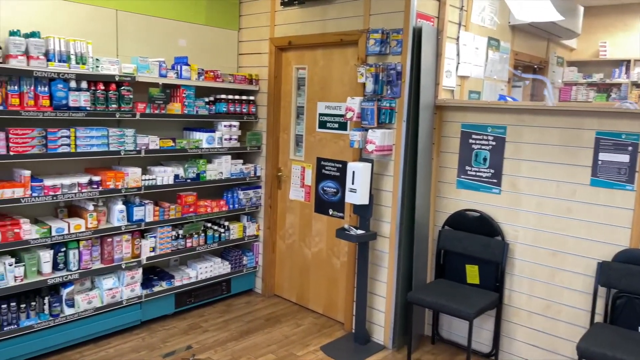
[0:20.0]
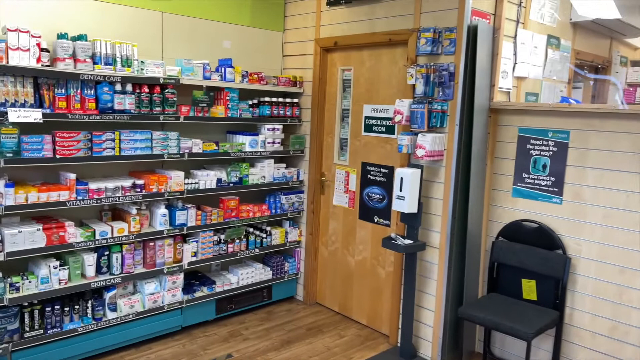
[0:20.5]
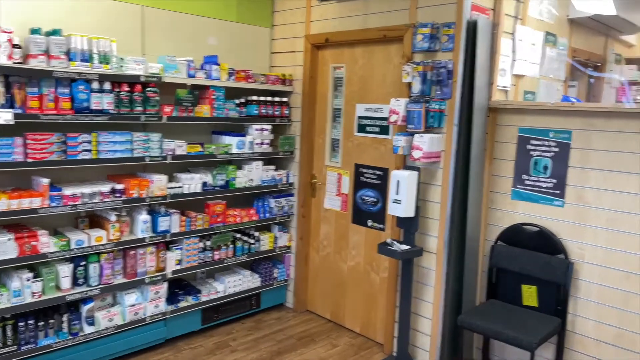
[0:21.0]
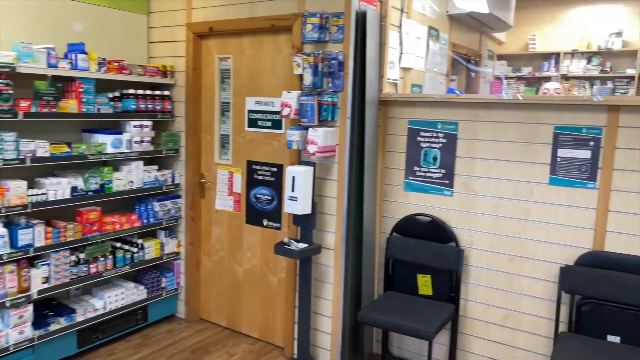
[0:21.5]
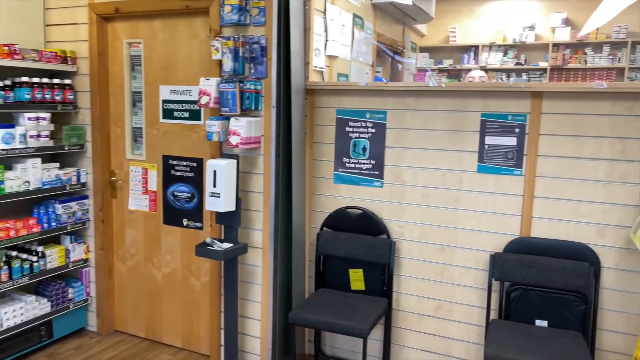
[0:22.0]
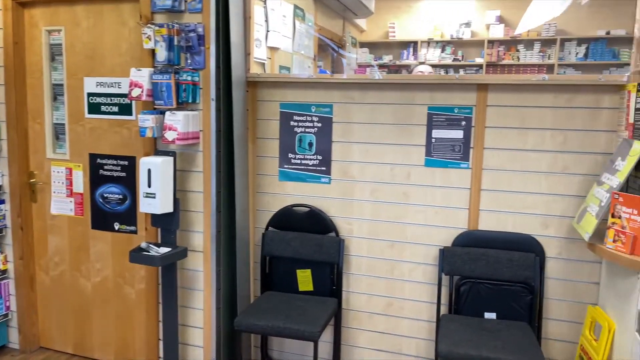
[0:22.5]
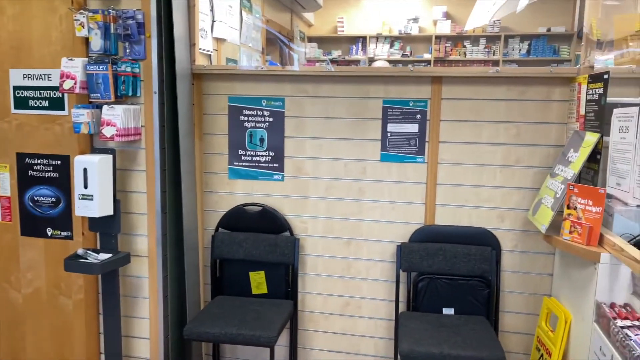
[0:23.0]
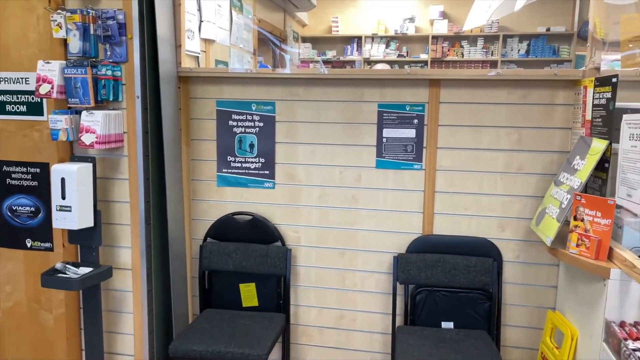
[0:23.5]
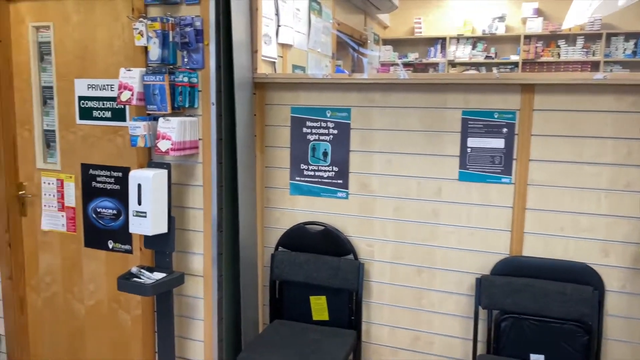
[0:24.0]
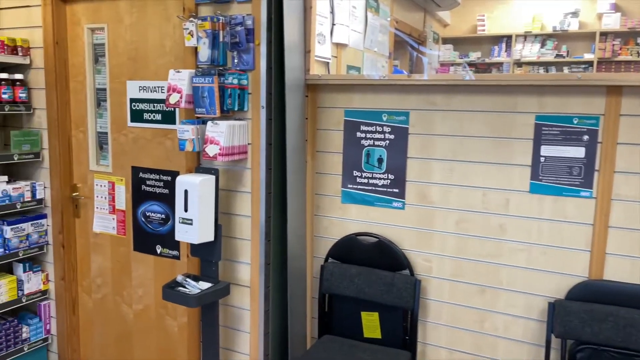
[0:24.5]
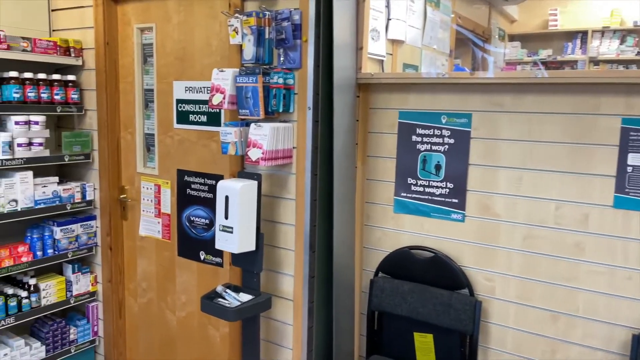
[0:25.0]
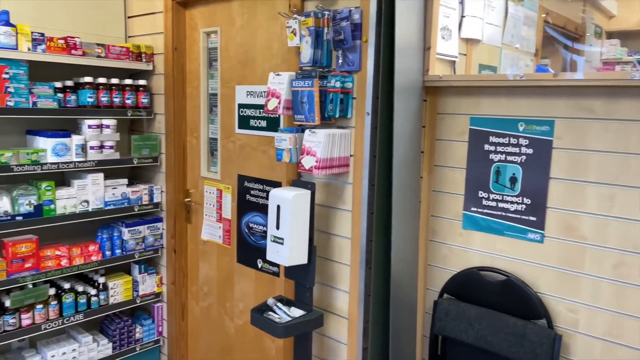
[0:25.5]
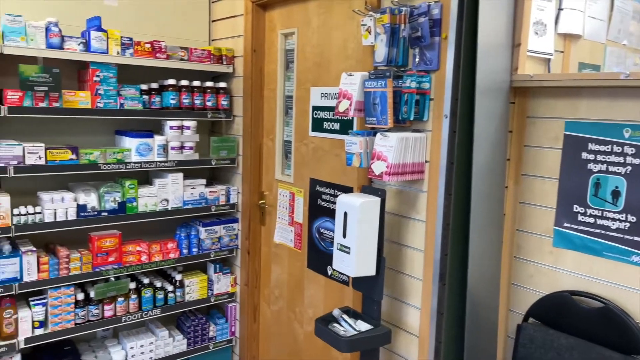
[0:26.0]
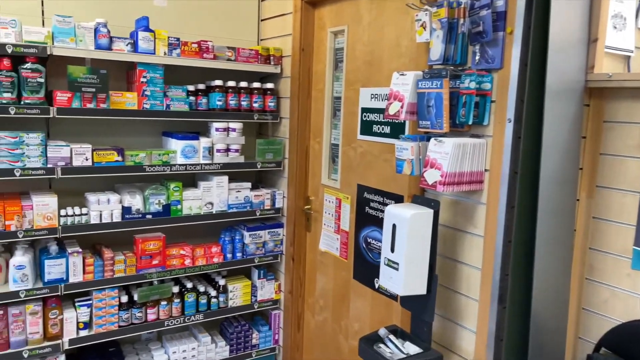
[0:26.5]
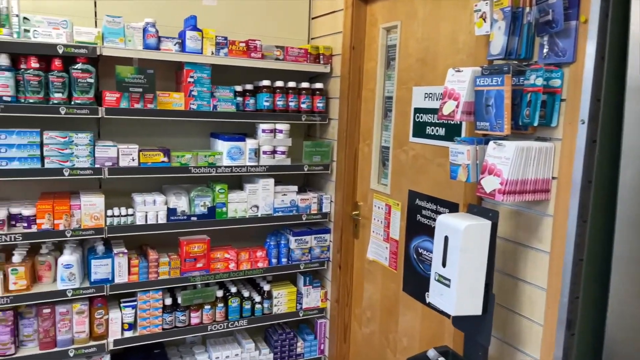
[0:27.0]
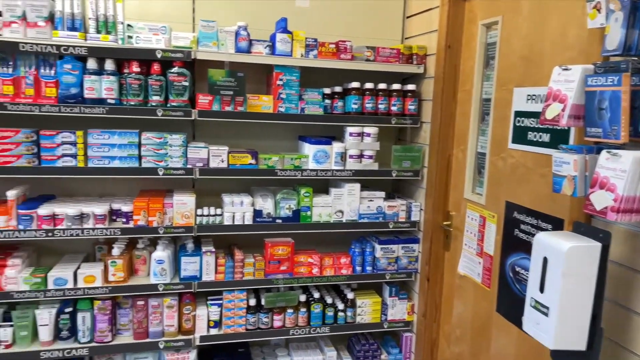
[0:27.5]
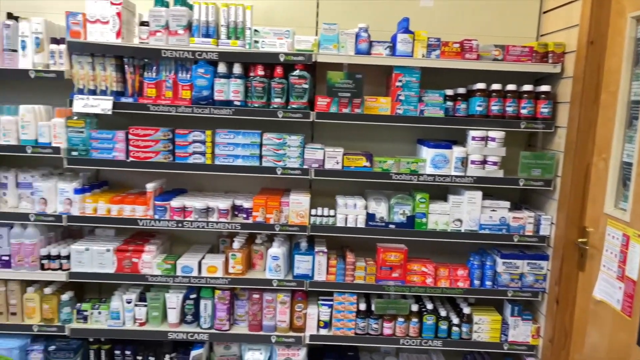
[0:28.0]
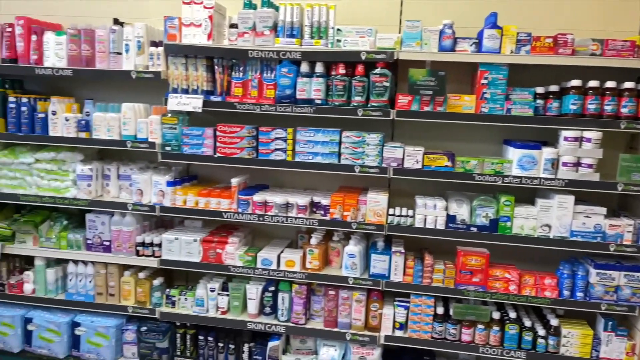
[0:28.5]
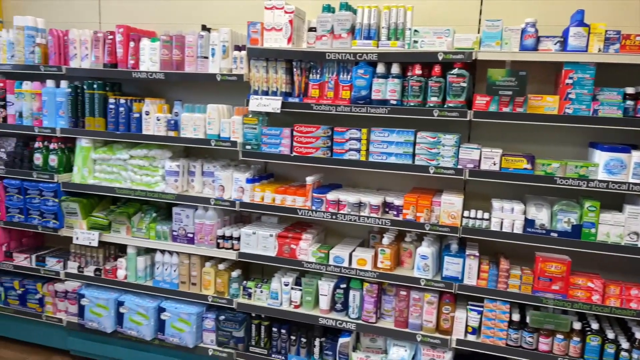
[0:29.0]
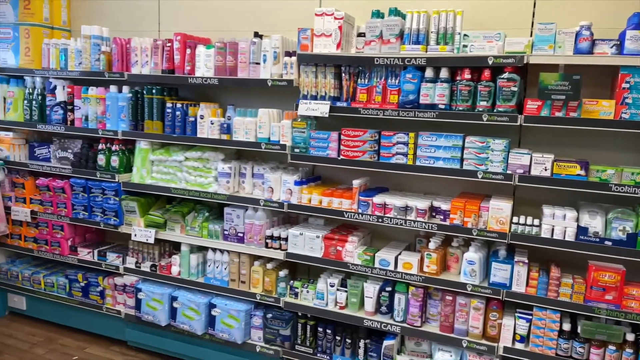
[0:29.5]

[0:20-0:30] The camera continues to pan through the pharmacy as if walking through it, showing lots of medicine on the shelves, mostly over-the-counter medicine. The focus shifts to the waiting room area, where there are a couple of black chairs and some signs on a little half wall with the prescription medications behind it. A light brown wood door with a narrow vertical window leads back to that area, and what looks like a hand sanitizer stand is right next to the door. The camera pans back and forth across the different parts of the pharmacy and the medicines available. The shelves are very well stocked, with apparently about seven or eight shelf levels.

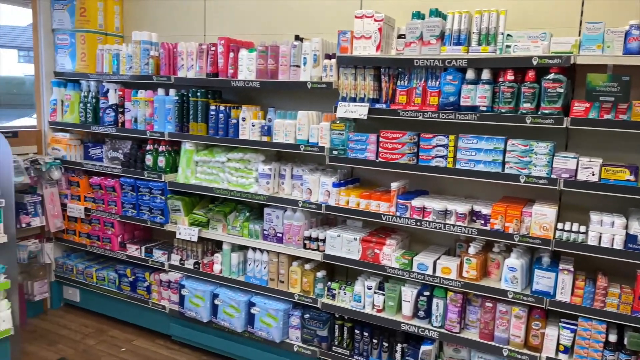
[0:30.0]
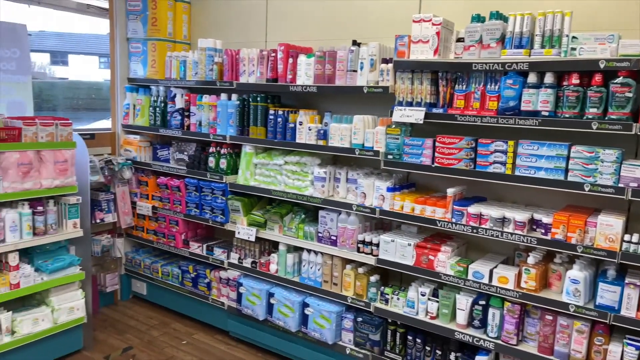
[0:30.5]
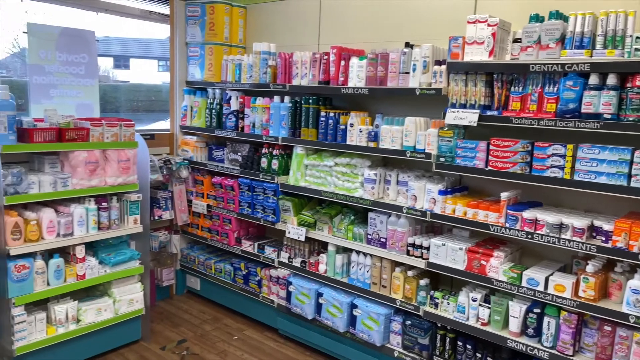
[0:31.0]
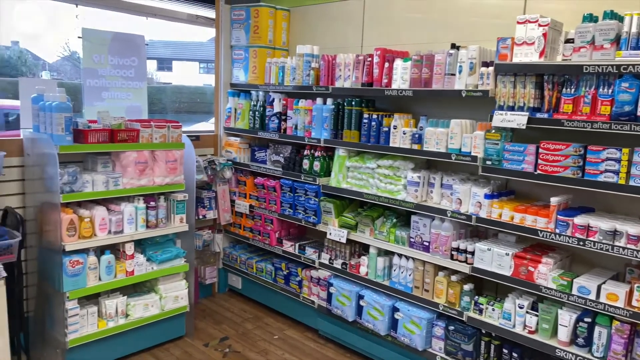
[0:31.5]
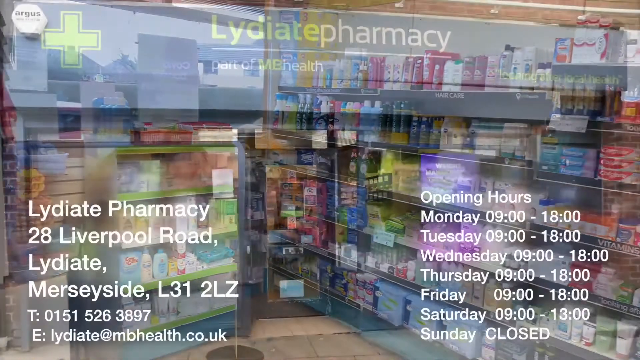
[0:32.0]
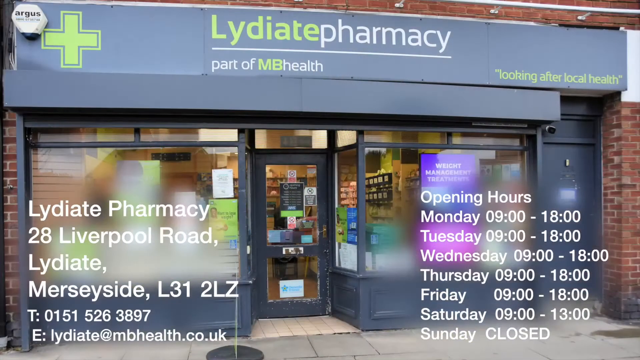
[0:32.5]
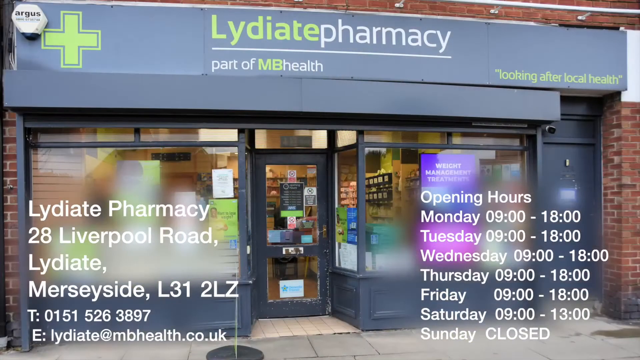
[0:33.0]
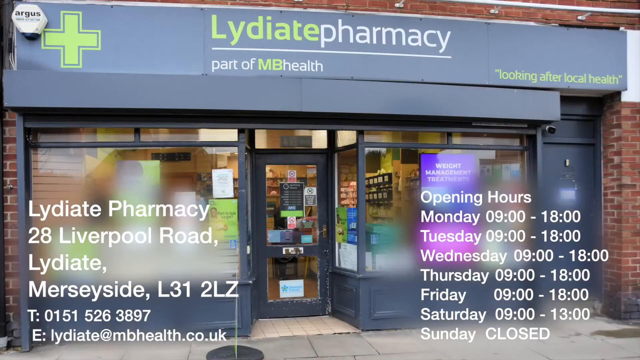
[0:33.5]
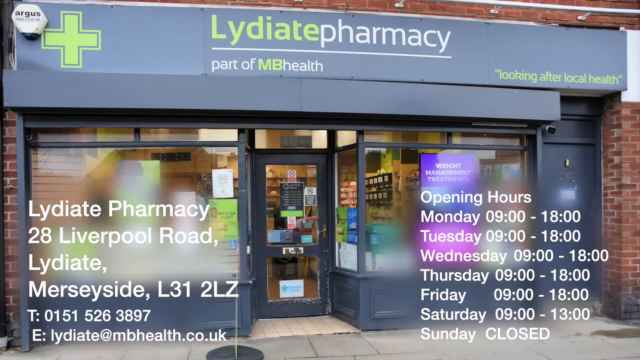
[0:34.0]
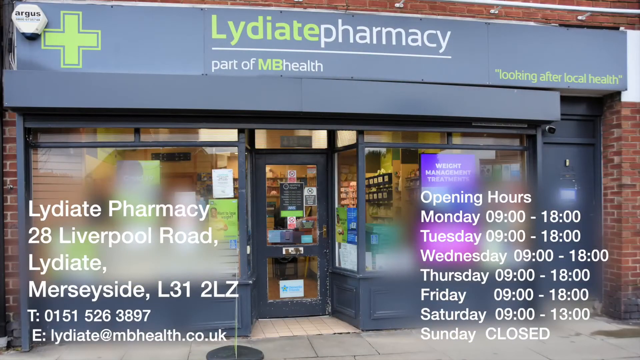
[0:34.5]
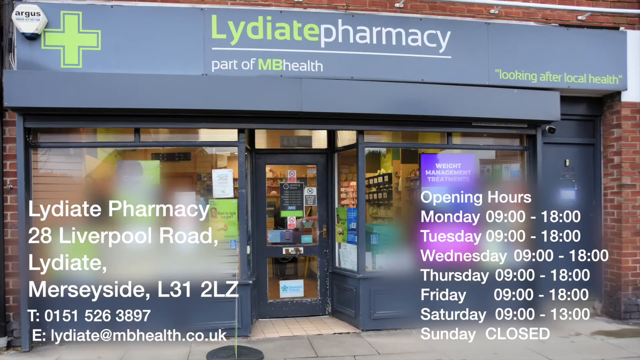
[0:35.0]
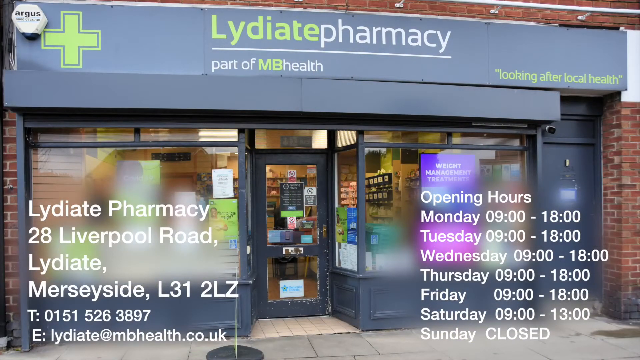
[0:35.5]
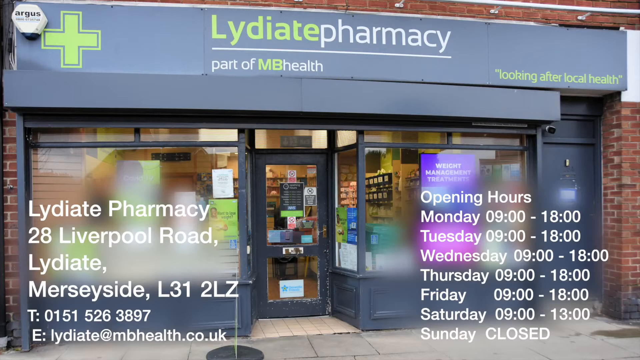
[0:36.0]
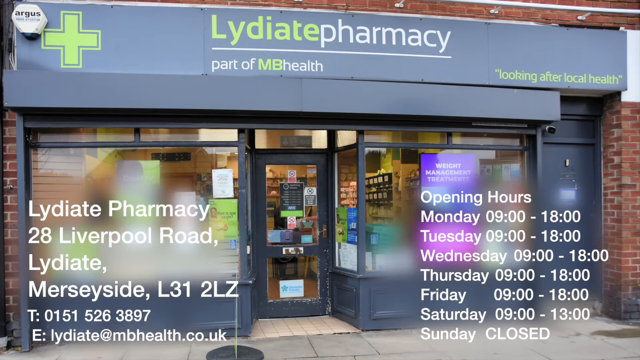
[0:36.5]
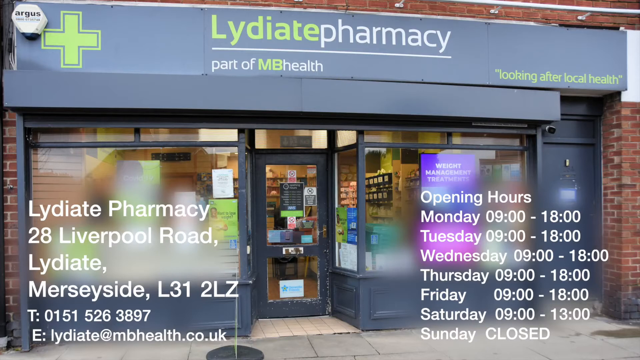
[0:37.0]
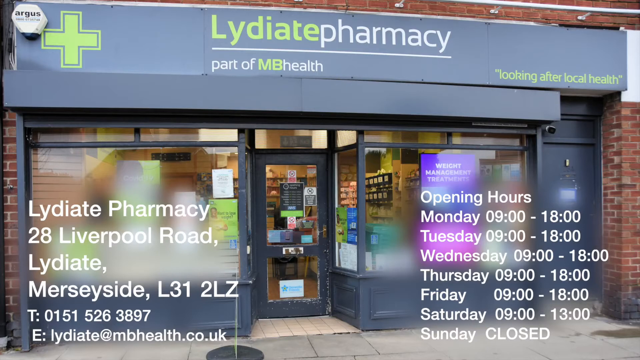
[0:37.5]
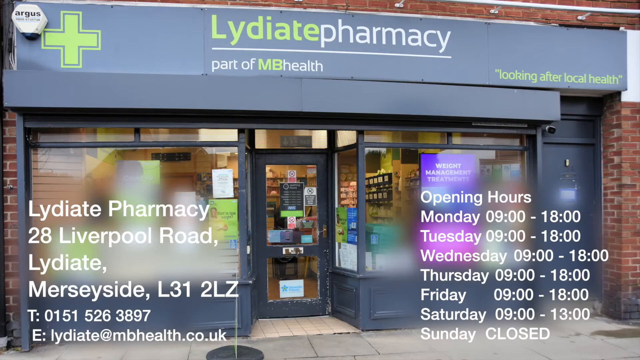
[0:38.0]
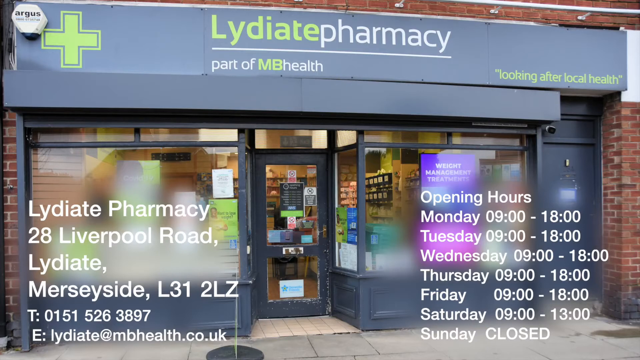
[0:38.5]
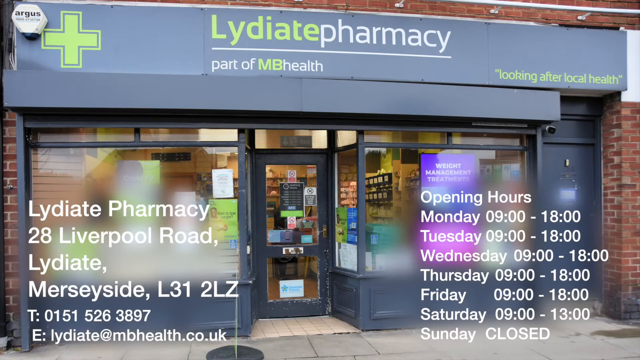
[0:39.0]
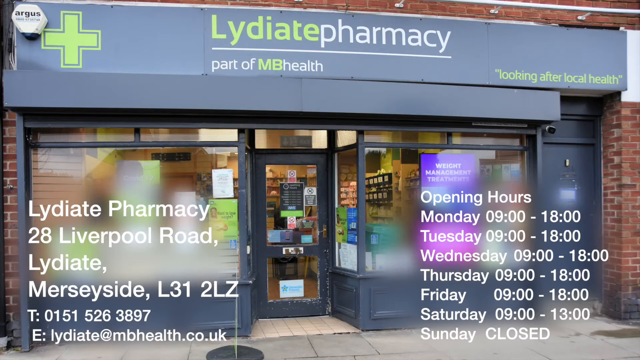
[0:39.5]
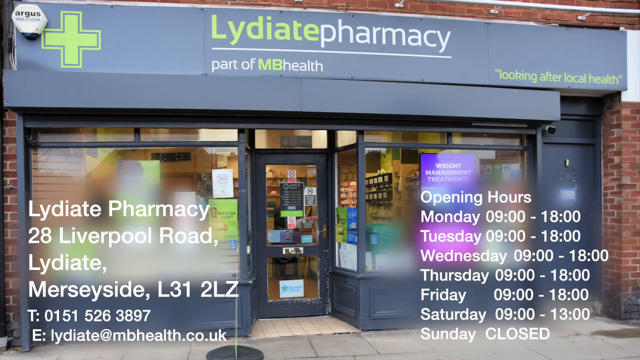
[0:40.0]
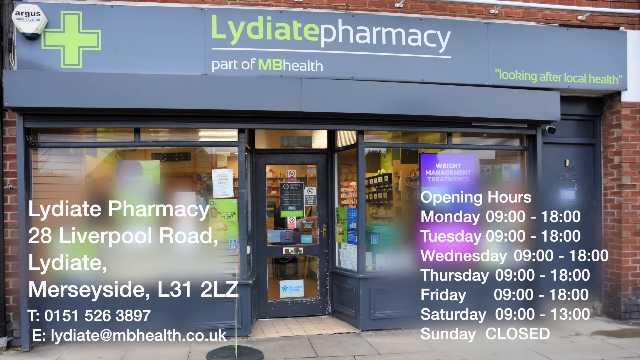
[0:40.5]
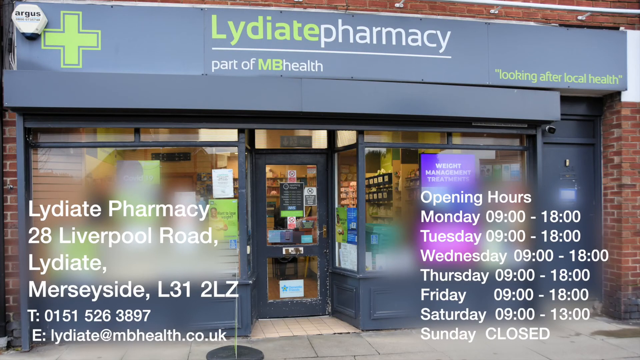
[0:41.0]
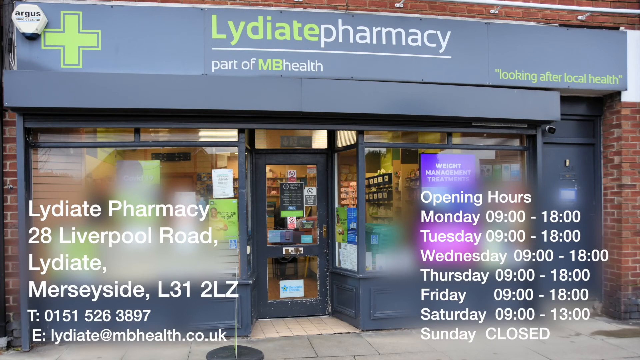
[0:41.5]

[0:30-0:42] The view moves down a shelf of toiletries and then returns to the outside view of Lydiate Pharmacy. White text appears with the store's location and hours. On the lower left it says "Lydiate pharmacy, 28 Liverpool Road Lydiate Merseyside L312 LZ", followed by a phone number. On the lower right it says "opening hours", listing Monday 9 o'clock to 1800 hours, Tuesday 9 o'clock to 1800 hours, and the same 9 o'clock to 1800 hours for each day through Saturday.